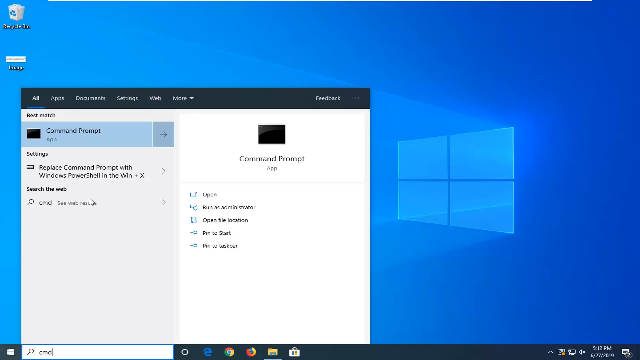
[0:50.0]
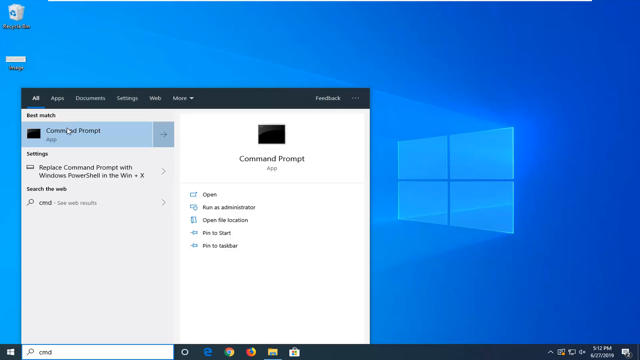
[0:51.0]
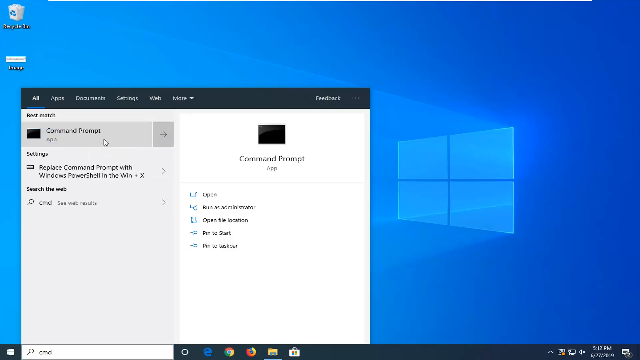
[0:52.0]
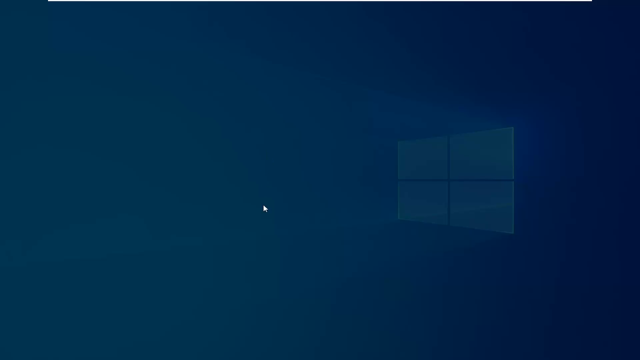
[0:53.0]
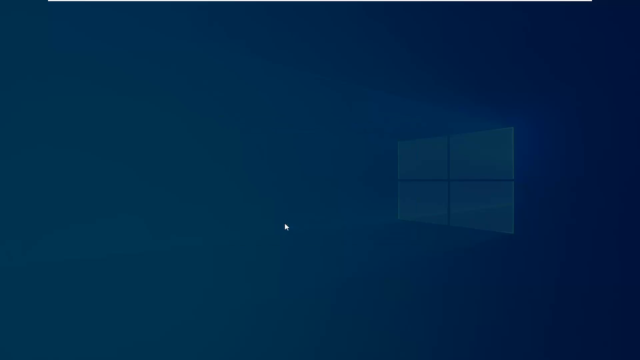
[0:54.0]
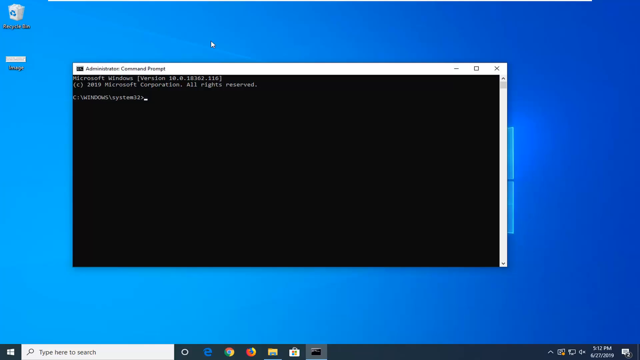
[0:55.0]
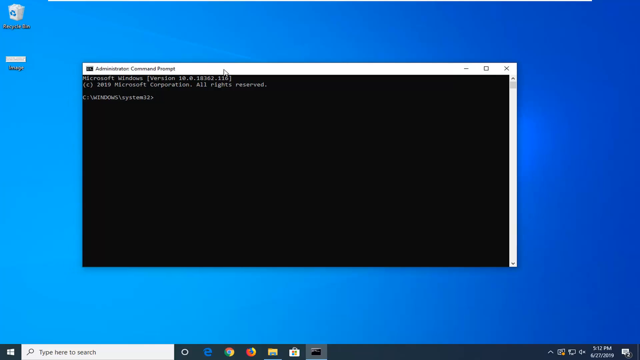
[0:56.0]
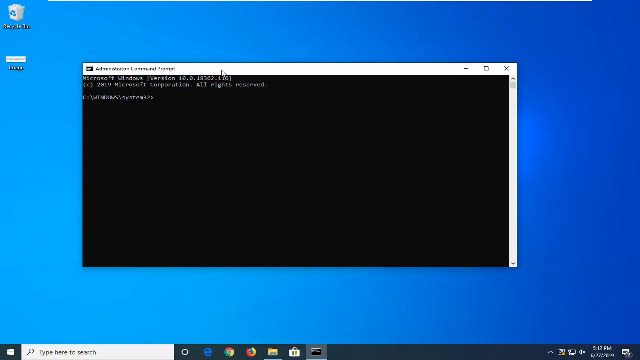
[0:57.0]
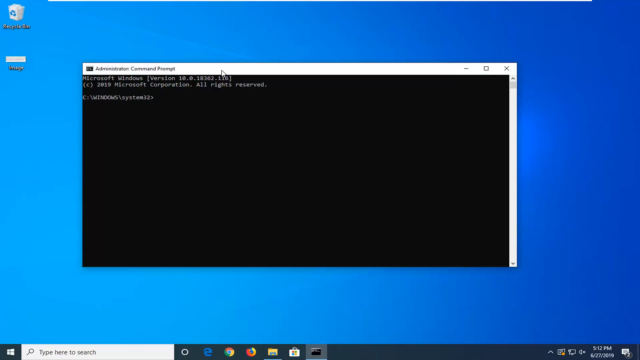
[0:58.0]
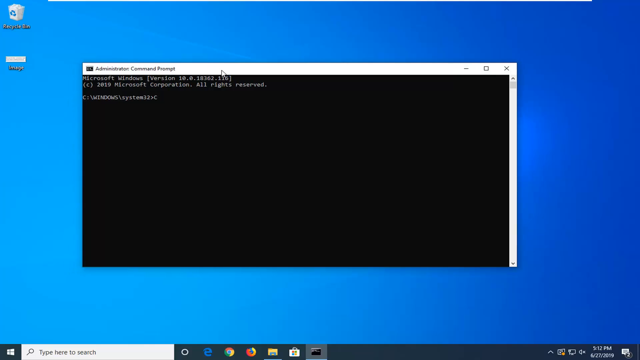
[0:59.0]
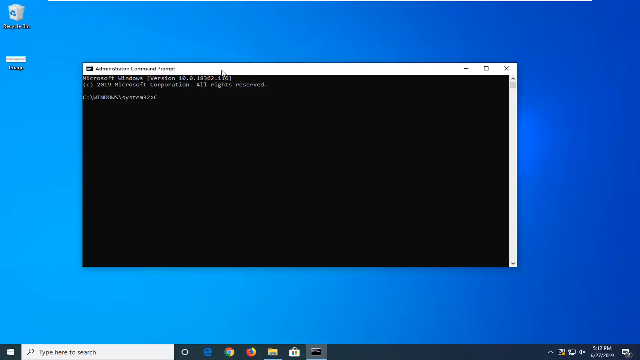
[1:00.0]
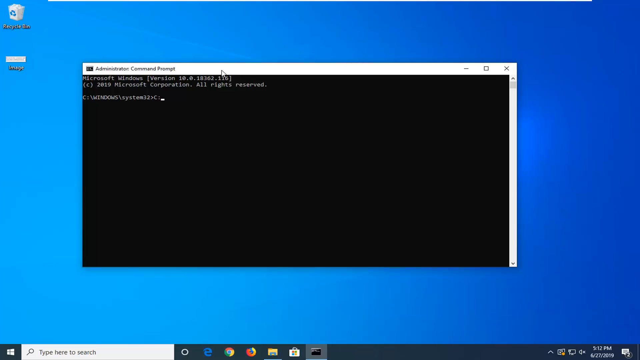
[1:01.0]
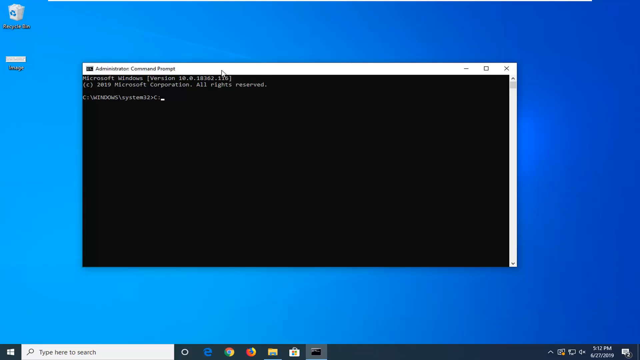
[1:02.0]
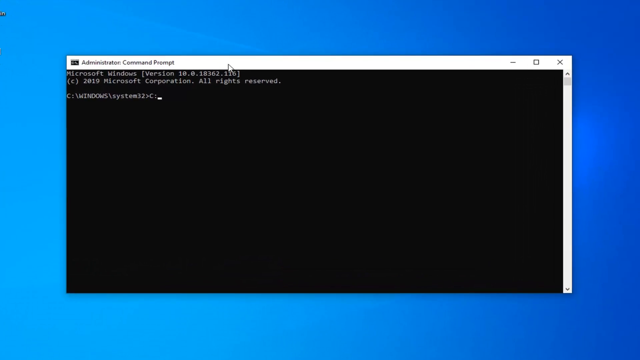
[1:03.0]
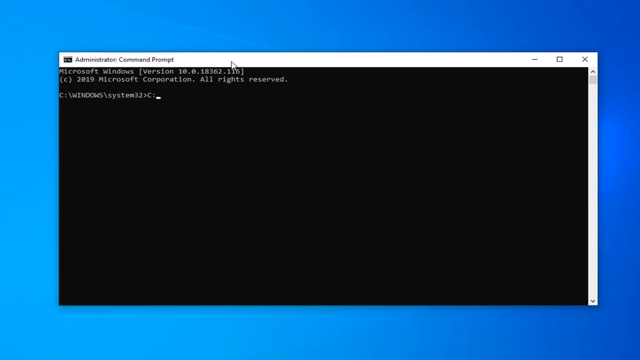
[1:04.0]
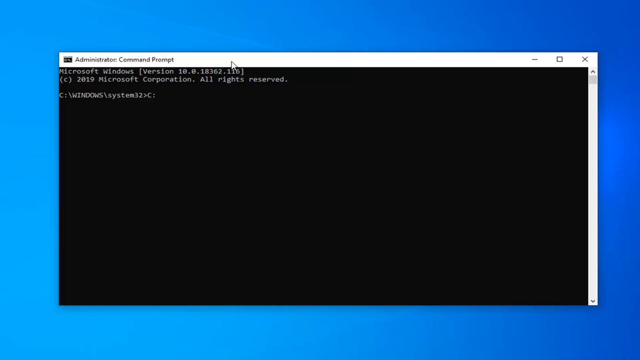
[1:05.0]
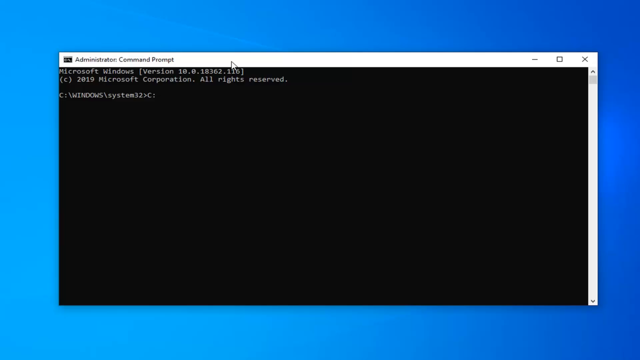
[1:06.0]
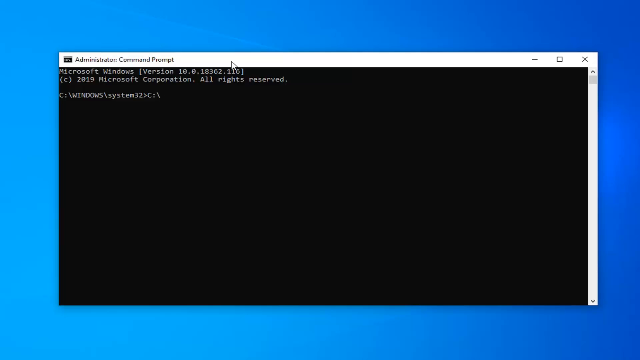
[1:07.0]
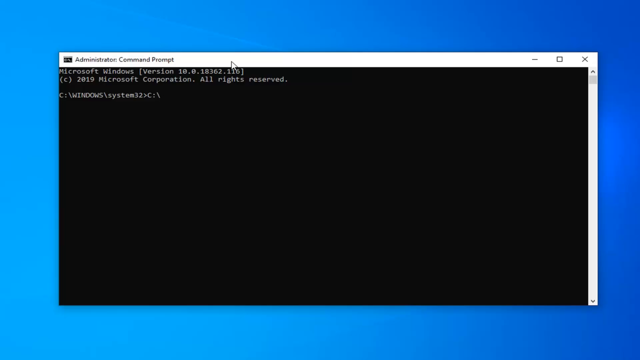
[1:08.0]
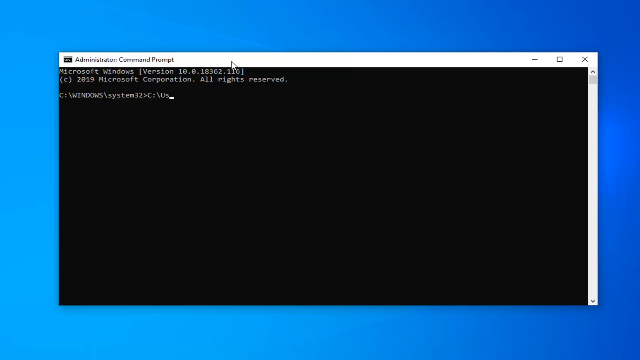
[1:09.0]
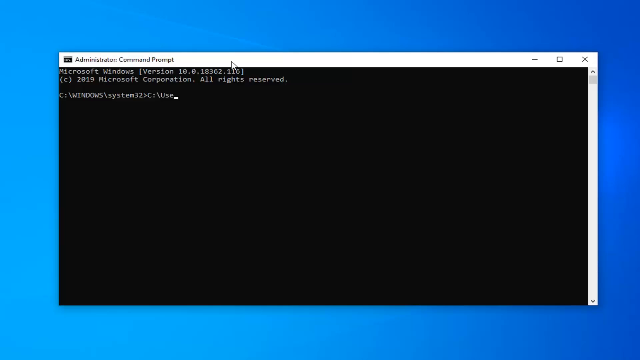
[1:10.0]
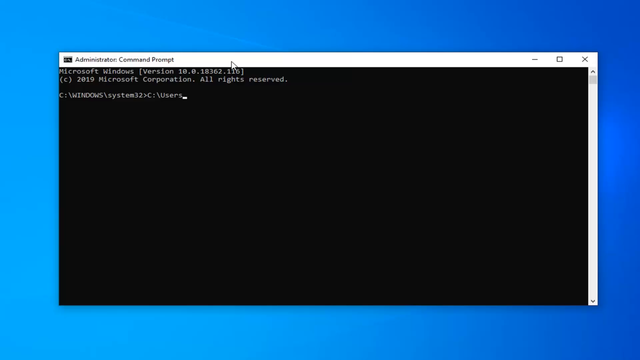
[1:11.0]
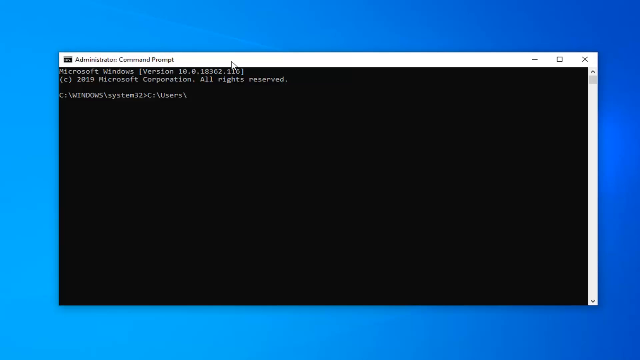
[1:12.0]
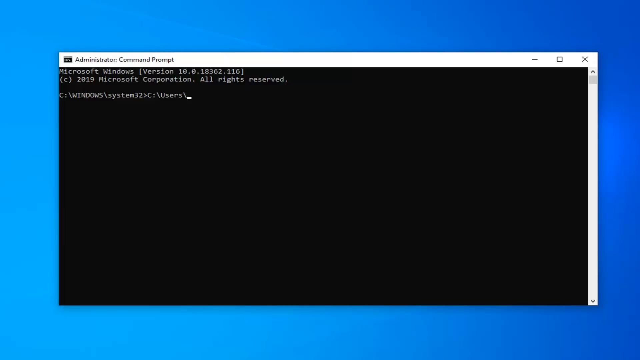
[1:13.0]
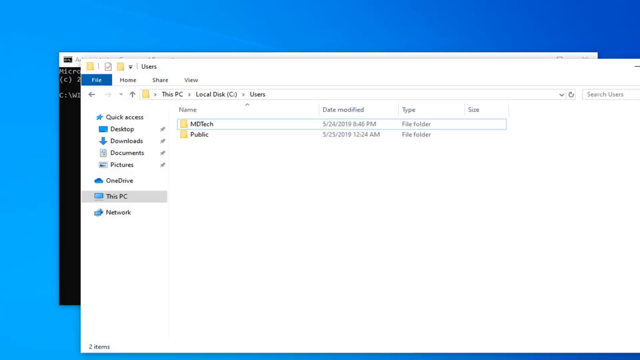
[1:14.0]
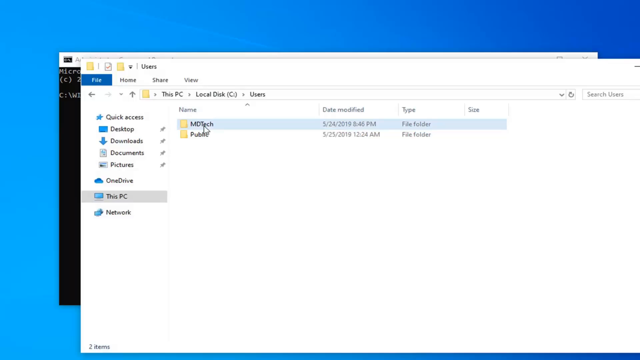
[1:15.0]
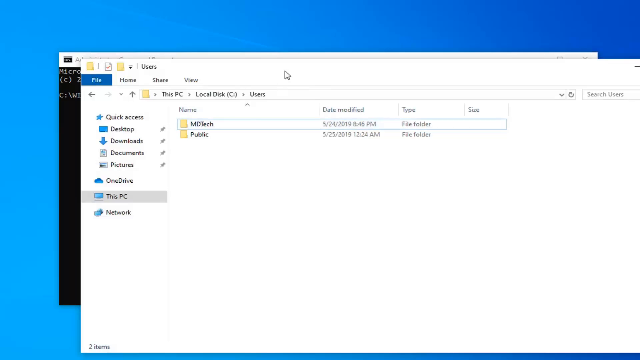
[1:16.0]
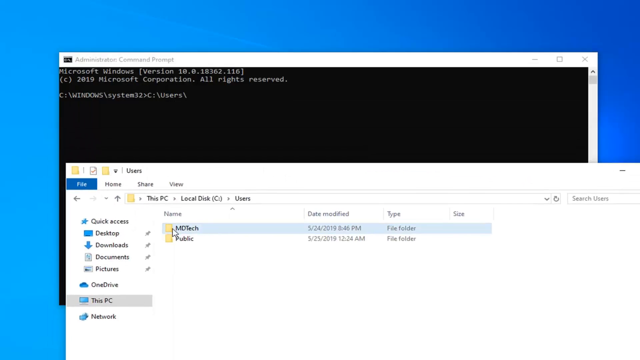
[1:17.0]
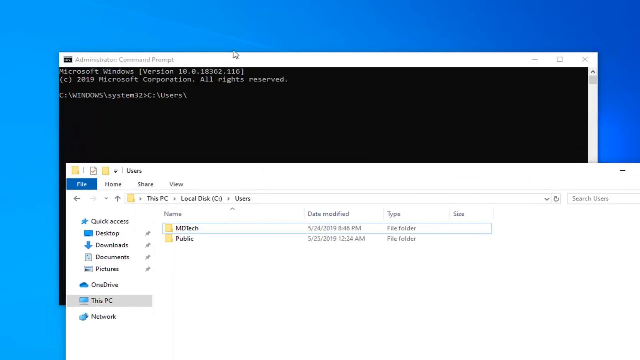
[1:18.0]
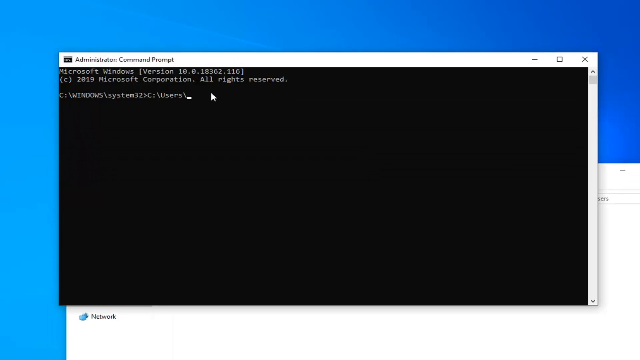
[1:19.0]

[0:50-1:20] The computer screen shows a search for the command prompt. At the top is a black bar listing All apps, Documents, Settings, Web, and More, with a white area underneath. Under Best Match, Command Prompt is highlighted, with Settings below it, including Replace Command Prompt with Windows PowerShell in the Win + X. To the right is the Command Prompt app with the choices Open, Run as Administrator, Open the Location, Pin to Start, and Pin to Taskbar. He goes to the Command Prompt and clicks Yes, and the Administrative Command Prompt opens.